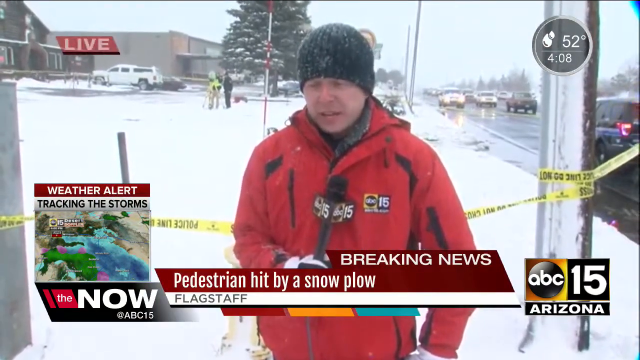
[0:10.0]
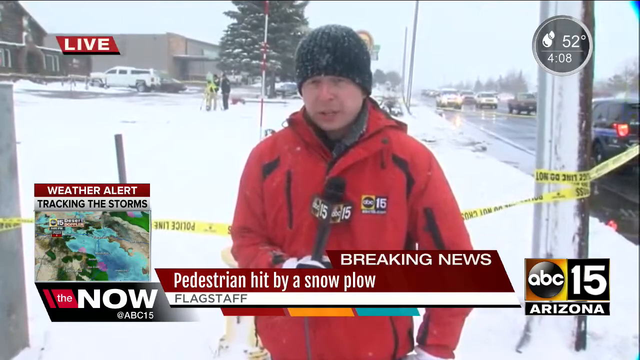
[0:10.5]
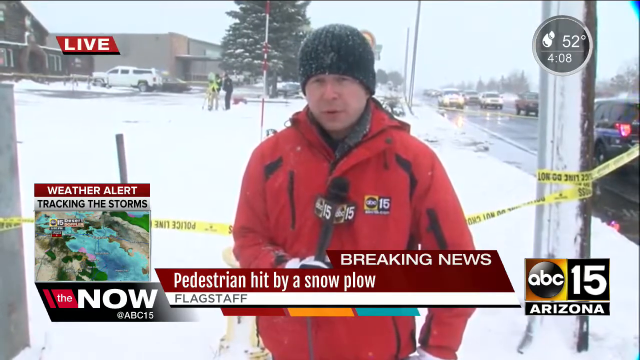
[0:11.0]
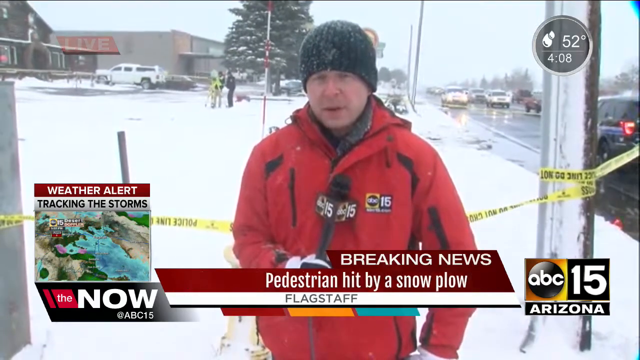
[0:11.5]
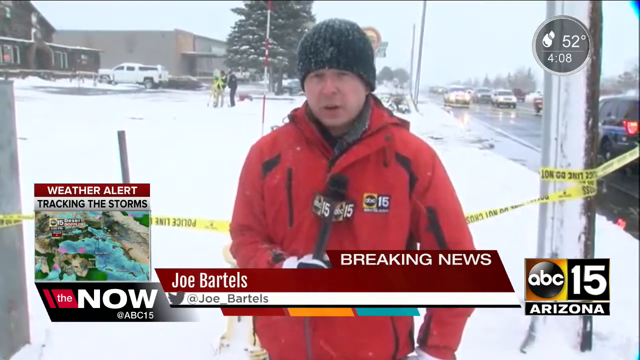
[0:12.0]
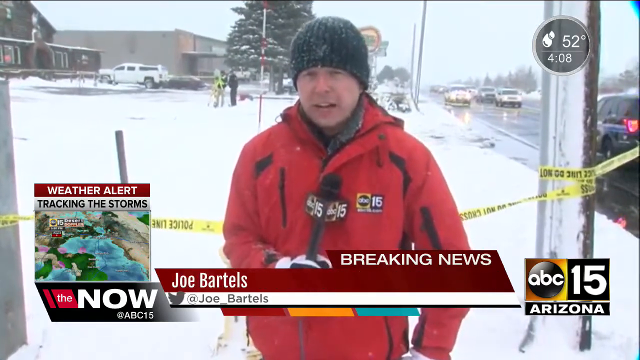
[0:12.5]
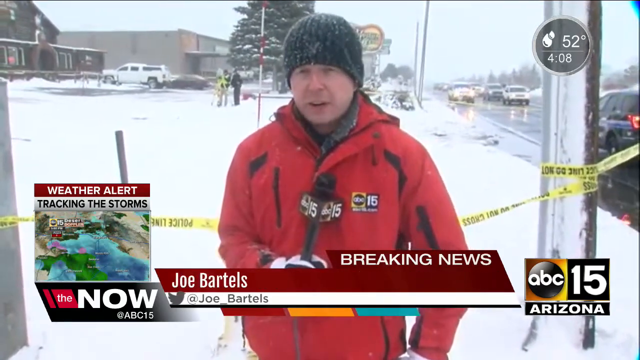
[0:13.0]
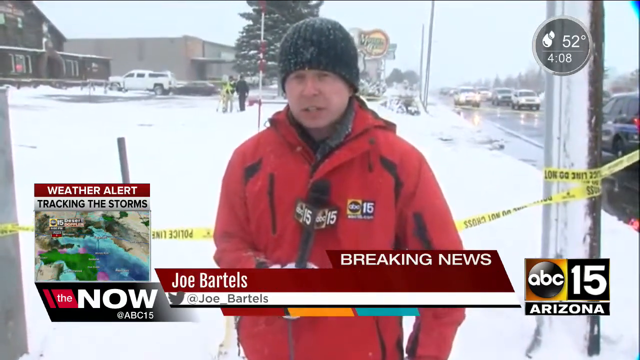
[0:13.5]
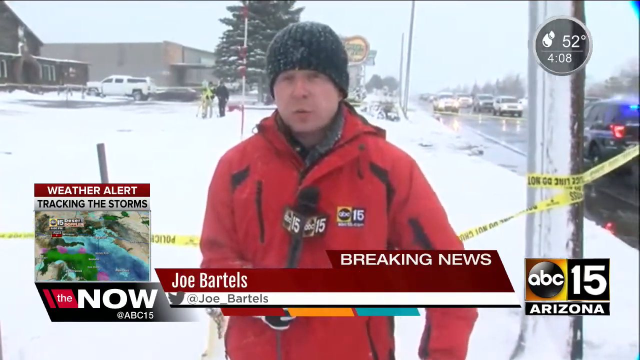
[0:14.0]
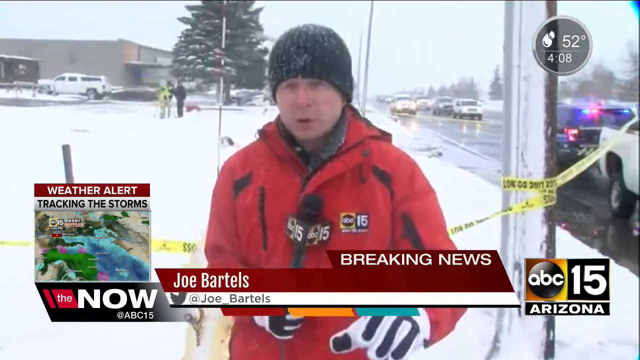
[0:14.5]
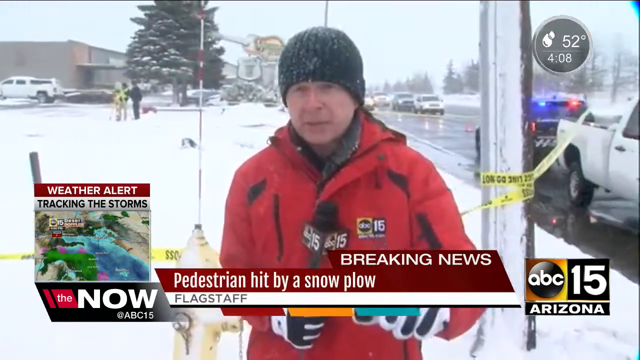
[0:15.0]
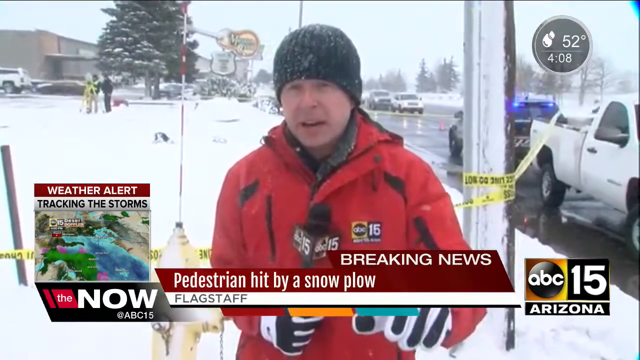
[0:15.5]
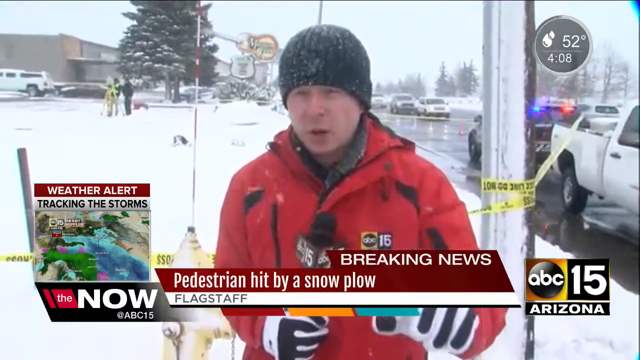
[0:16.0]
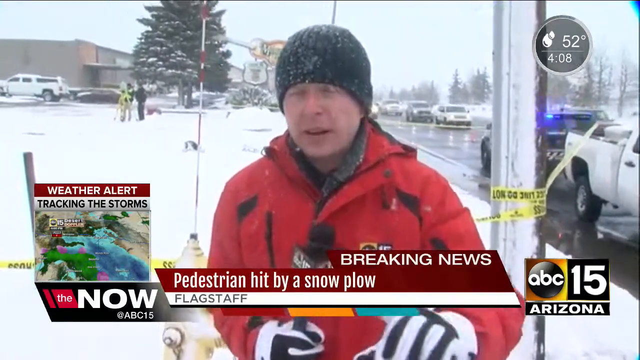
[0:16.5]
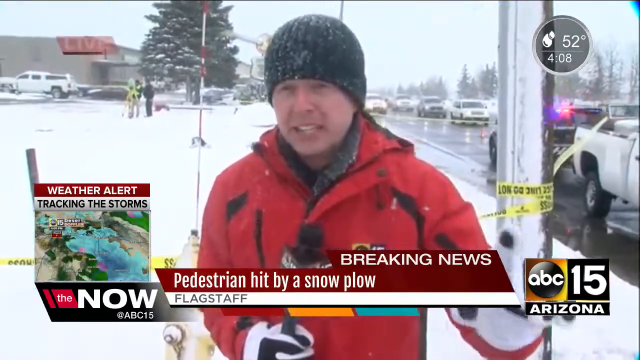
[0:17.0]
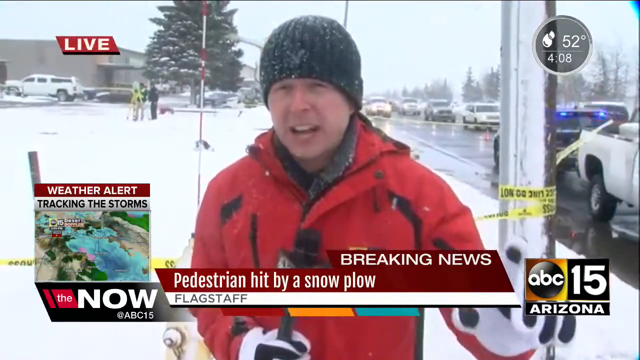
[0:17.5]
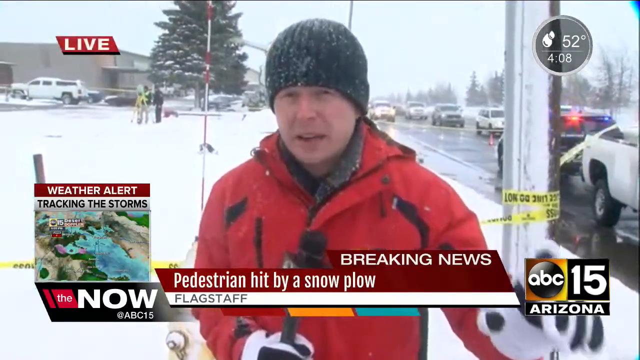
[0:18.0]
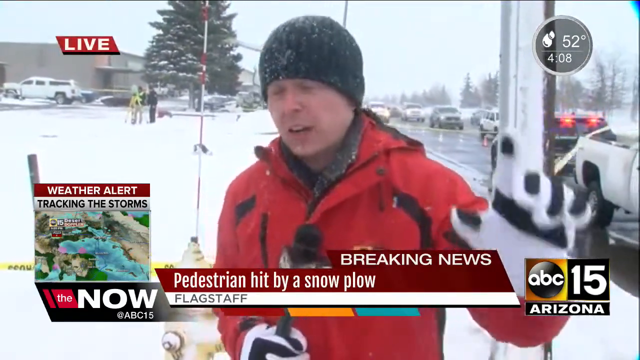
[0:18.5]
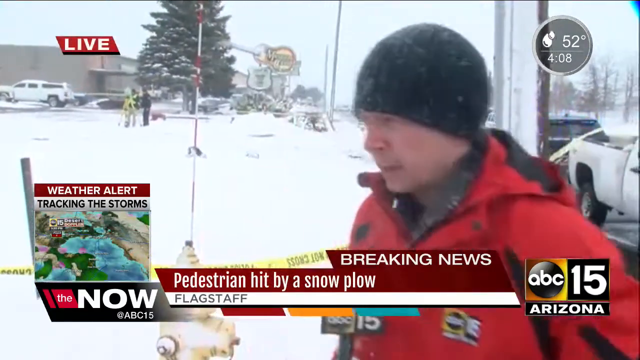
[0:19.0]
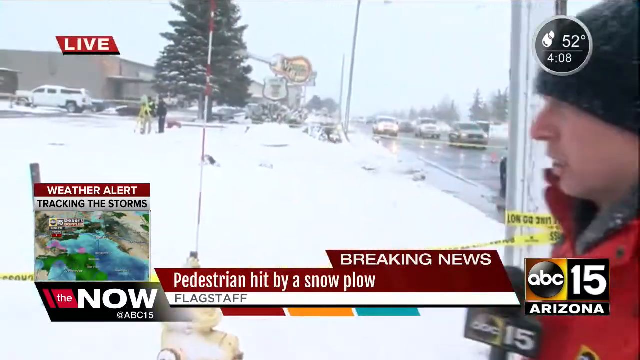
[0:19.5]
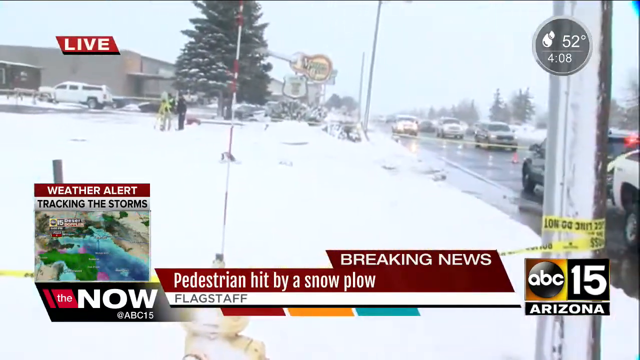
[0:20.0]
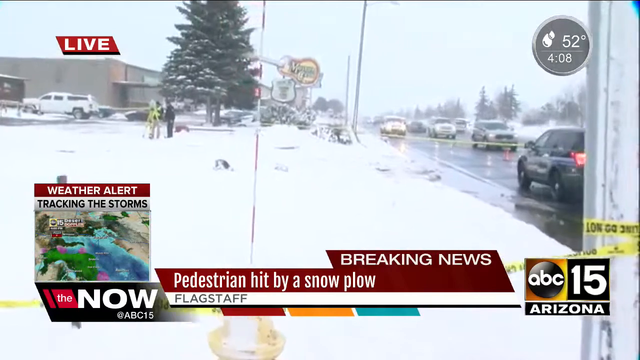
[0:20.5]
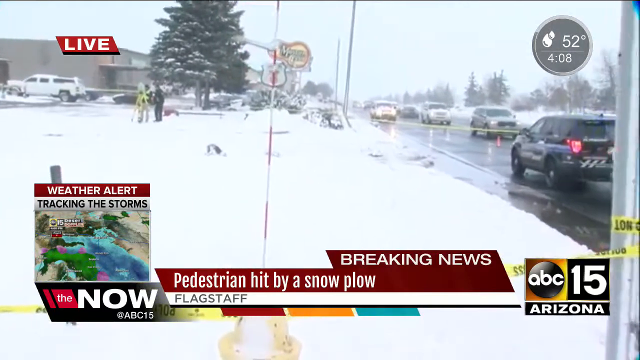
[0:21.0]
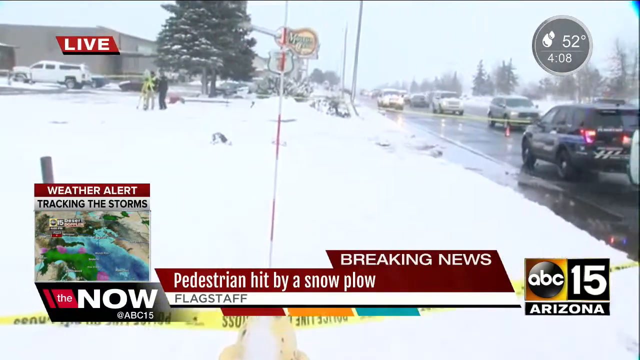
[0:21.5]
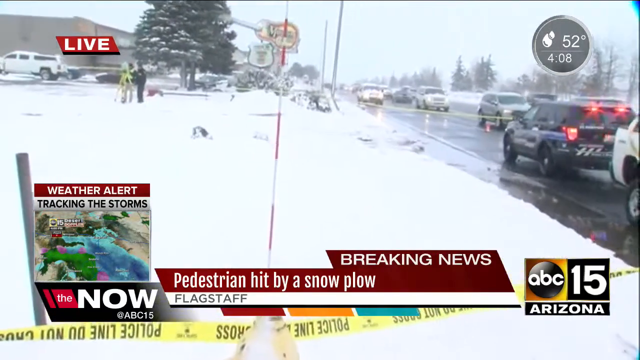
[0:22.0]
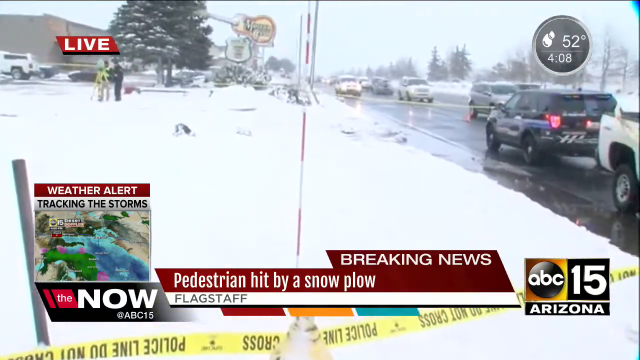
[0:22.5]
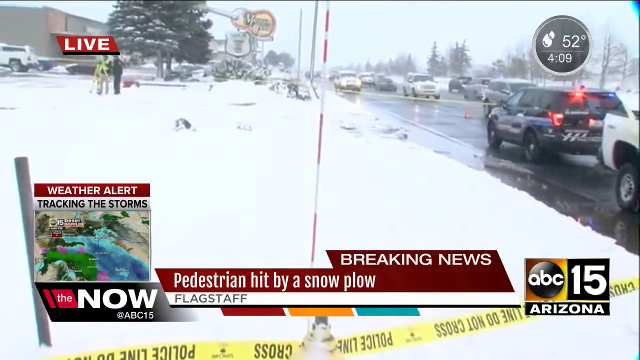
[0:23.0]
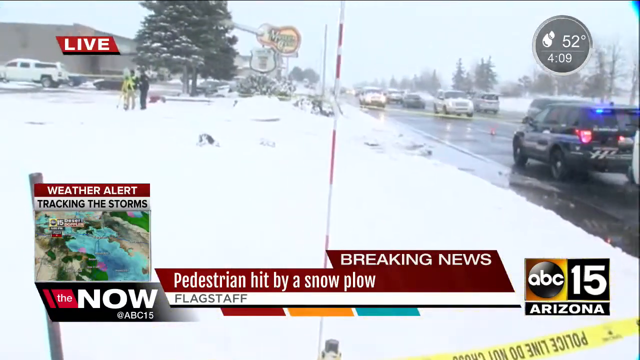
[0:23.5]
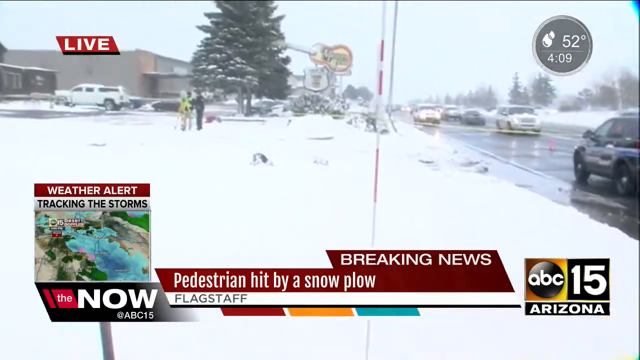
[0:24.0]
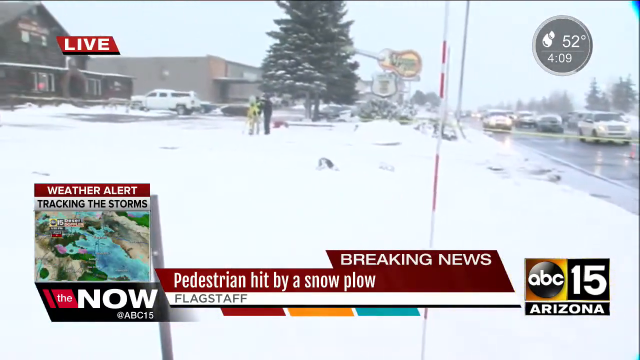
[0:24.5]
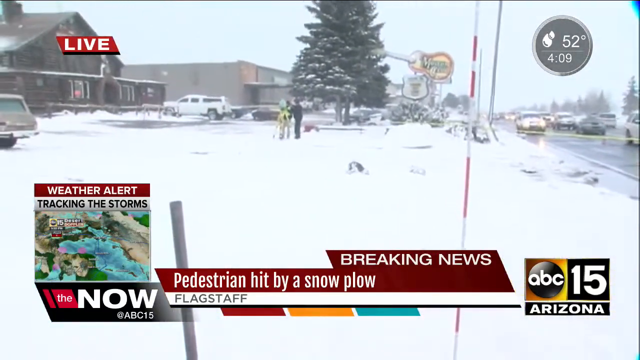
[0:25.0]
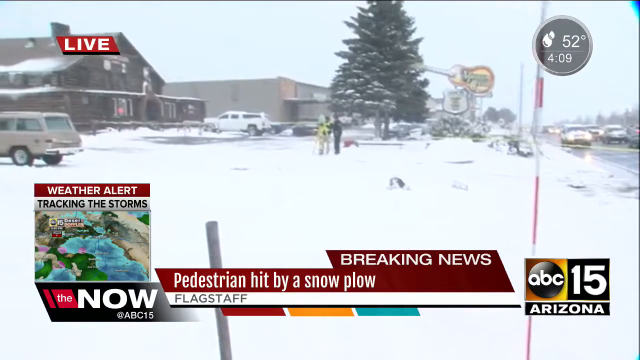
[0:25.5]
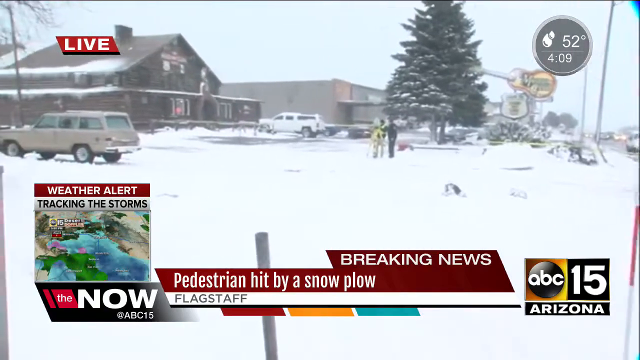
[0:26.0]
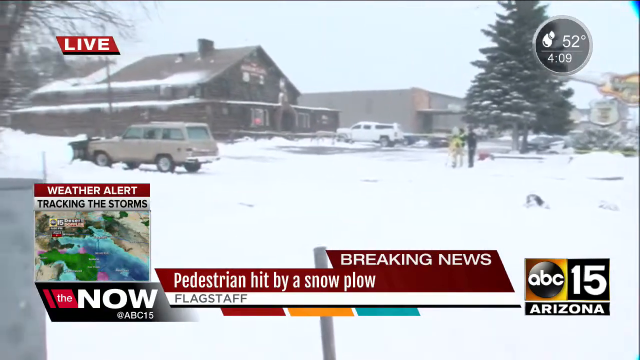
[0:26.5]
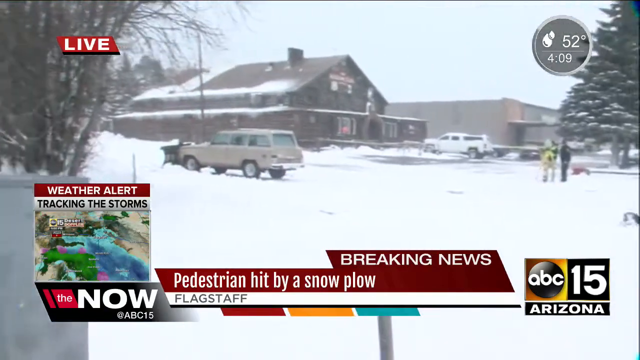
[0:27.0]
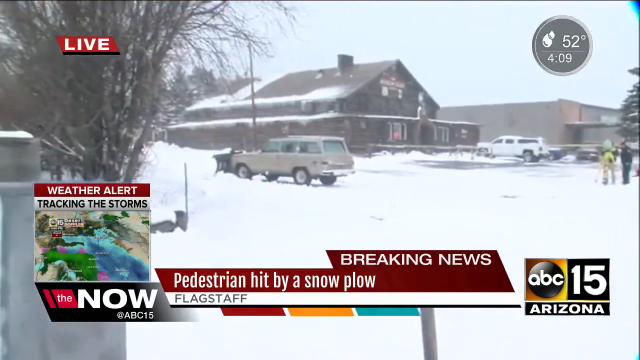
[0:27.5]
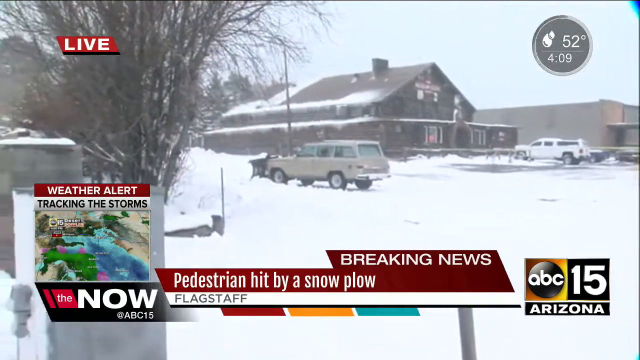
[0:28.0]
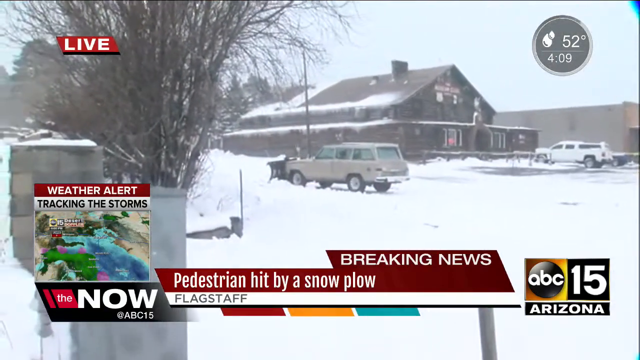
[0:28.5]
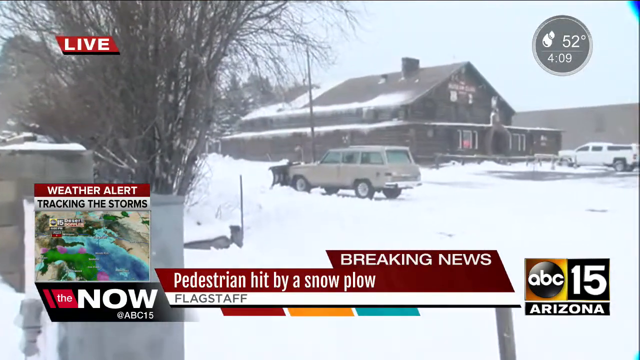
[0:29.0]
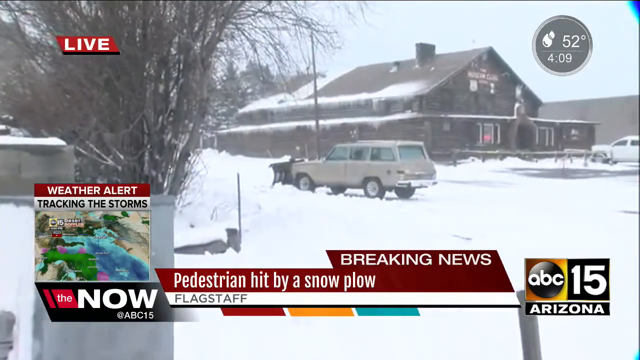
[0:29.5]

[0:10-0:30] A news anchor is next to the road, with cars moving along it. He stands right behind caution tape that has been tied around some poles and other utility fixtures in the area. Behind the caution tape there appear to be two police officers. A small clip about tracking the storms is still on screen. The anchor appears to have a breaking story about a pedestrian being hit by a snowplow, and his name is Joe Partels. Behind the pole is a police SUV with its lights flashing. The man then moves out of the way, and the camera kind of films the scene behind the caution tape, passing by a beige SUV in the snow.